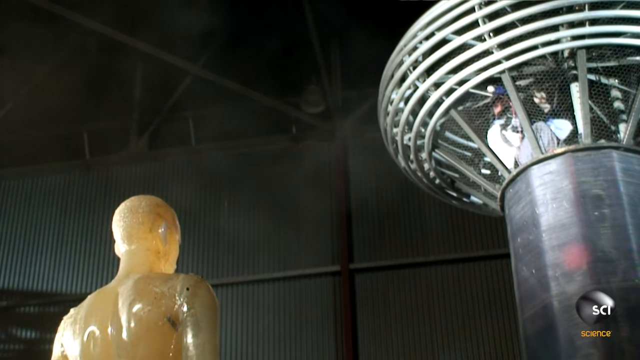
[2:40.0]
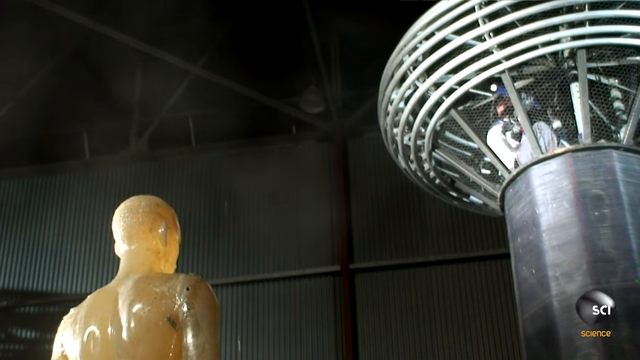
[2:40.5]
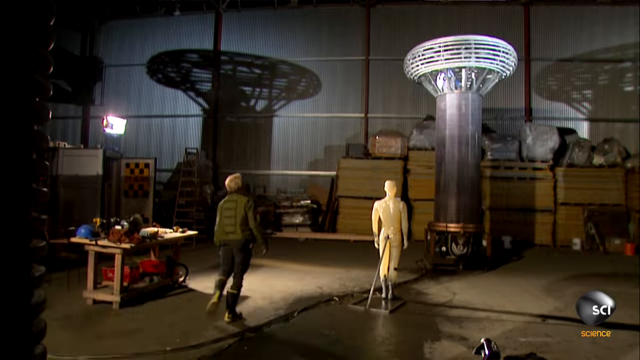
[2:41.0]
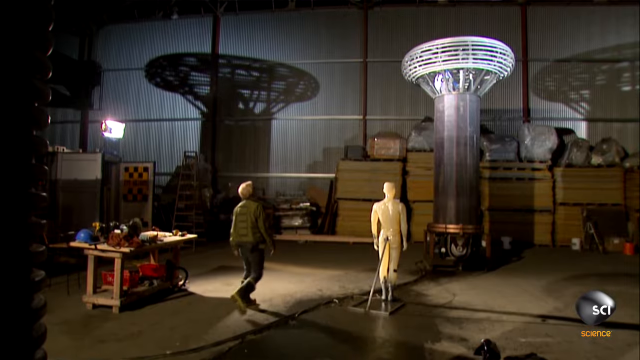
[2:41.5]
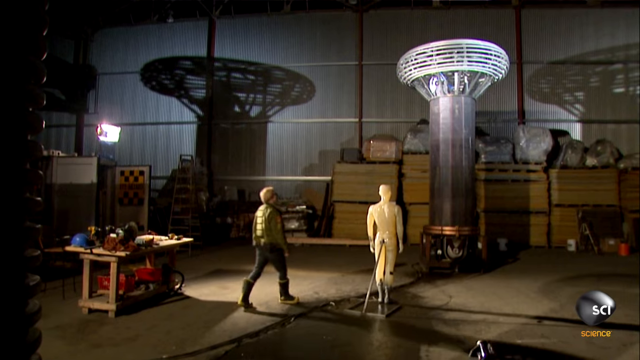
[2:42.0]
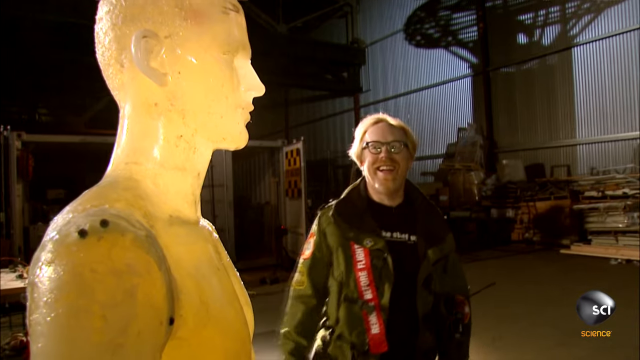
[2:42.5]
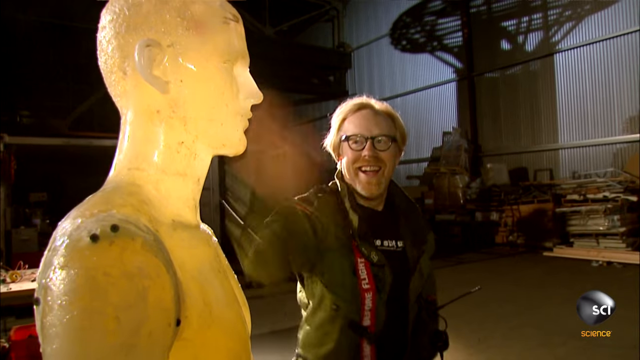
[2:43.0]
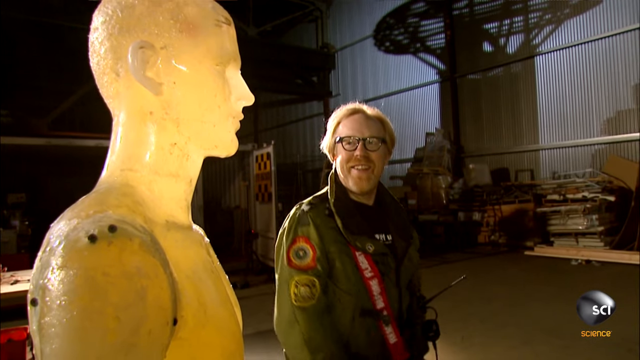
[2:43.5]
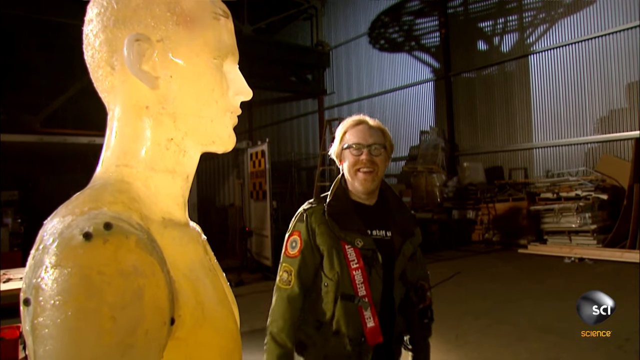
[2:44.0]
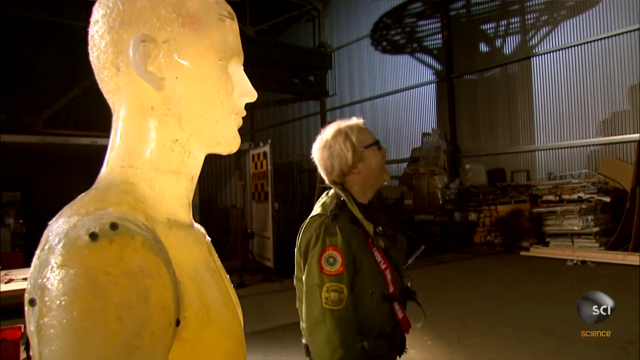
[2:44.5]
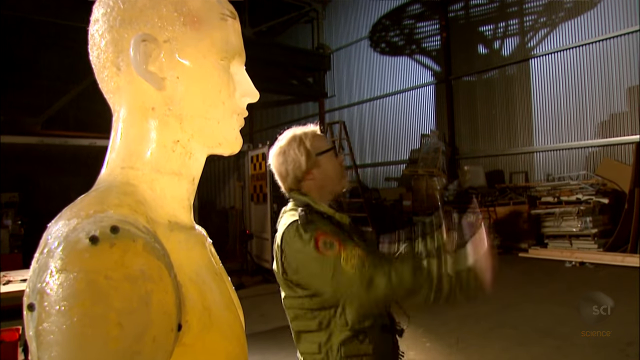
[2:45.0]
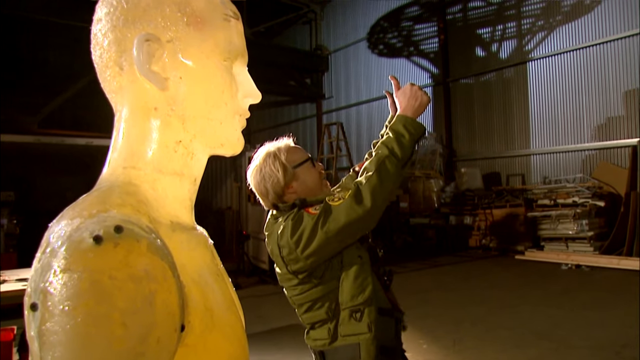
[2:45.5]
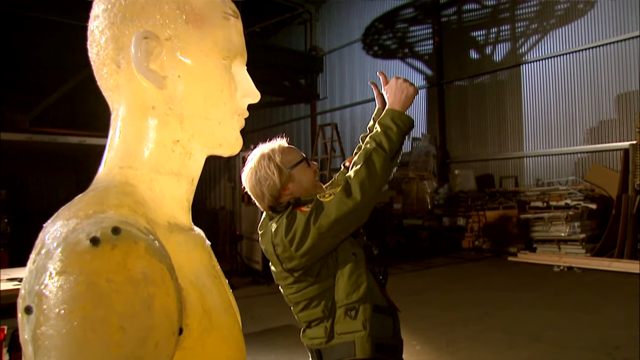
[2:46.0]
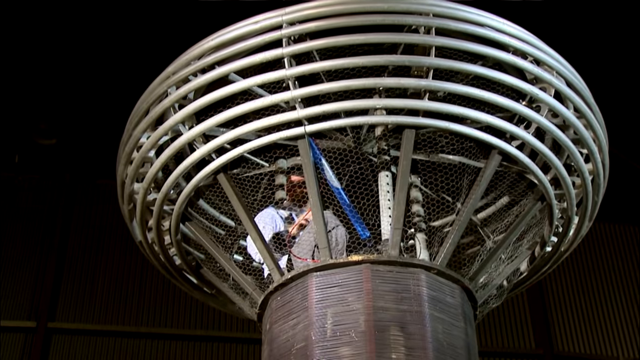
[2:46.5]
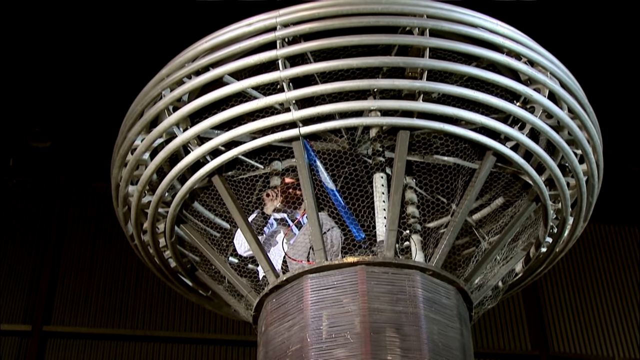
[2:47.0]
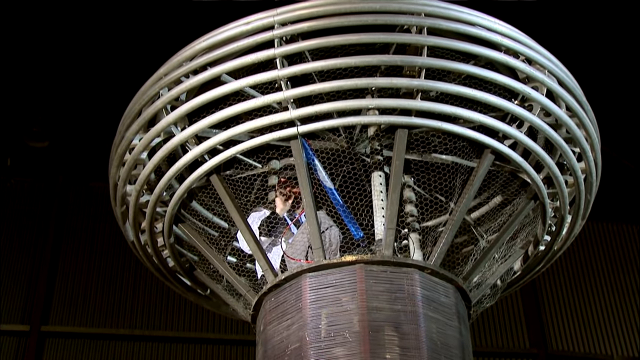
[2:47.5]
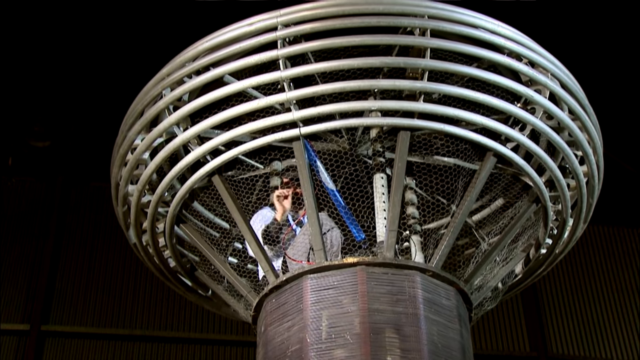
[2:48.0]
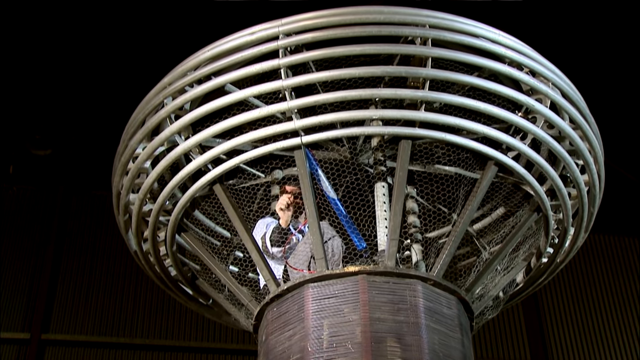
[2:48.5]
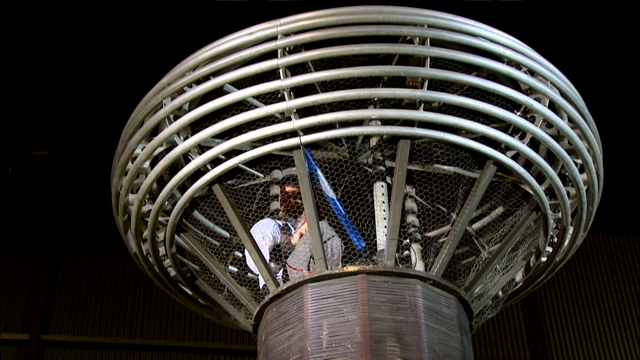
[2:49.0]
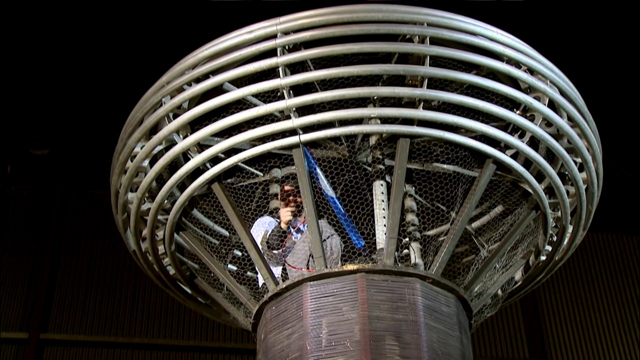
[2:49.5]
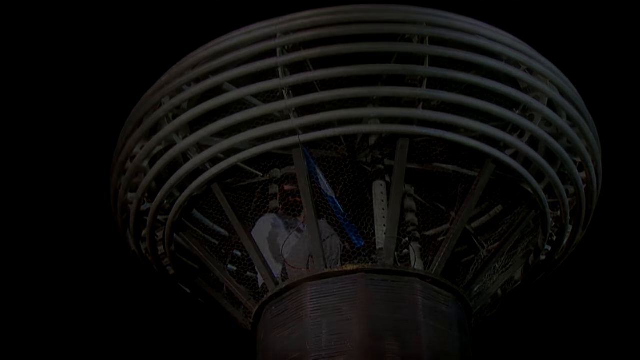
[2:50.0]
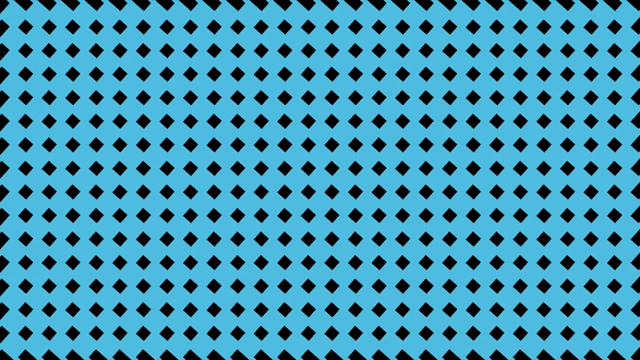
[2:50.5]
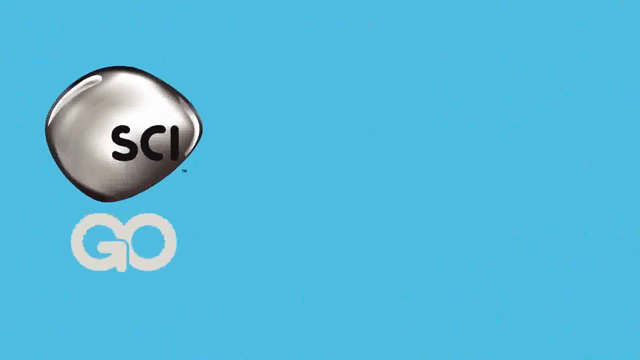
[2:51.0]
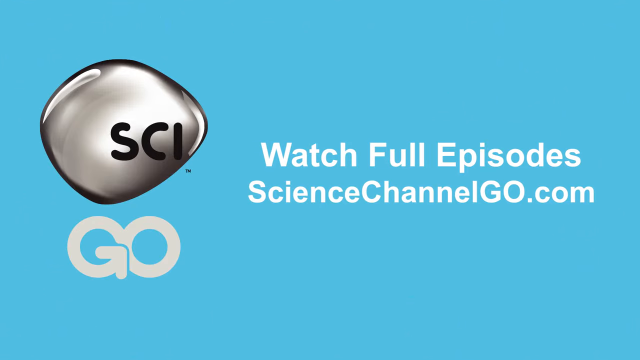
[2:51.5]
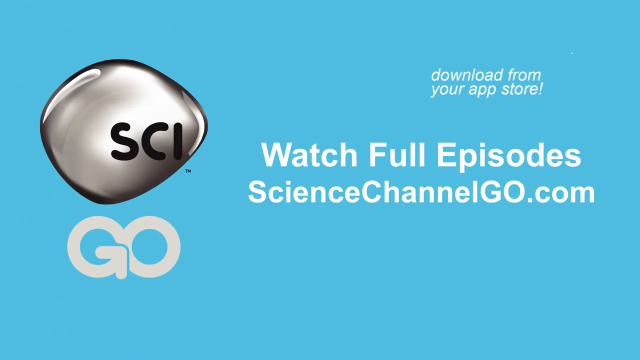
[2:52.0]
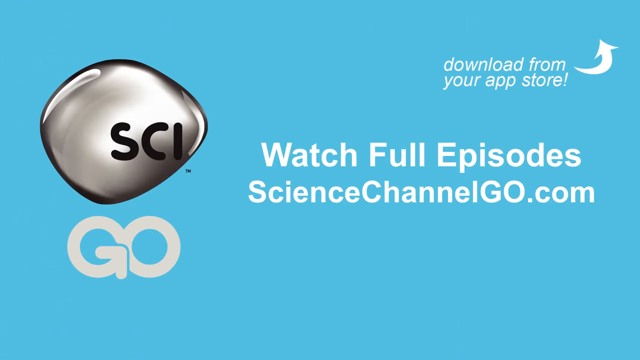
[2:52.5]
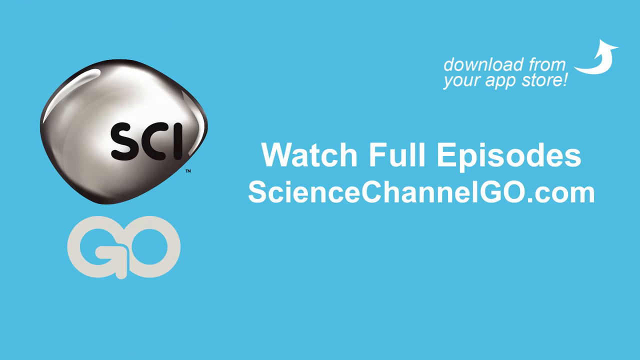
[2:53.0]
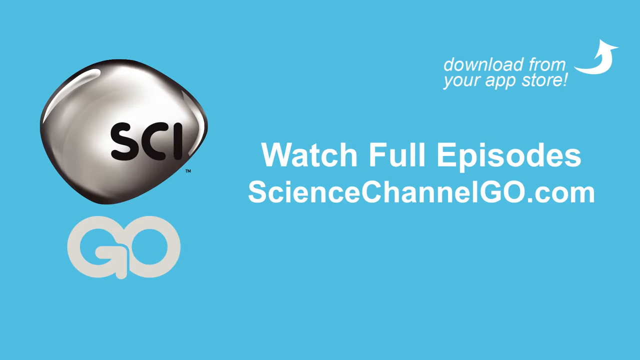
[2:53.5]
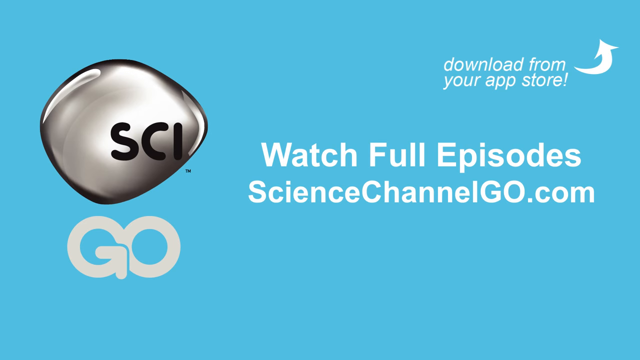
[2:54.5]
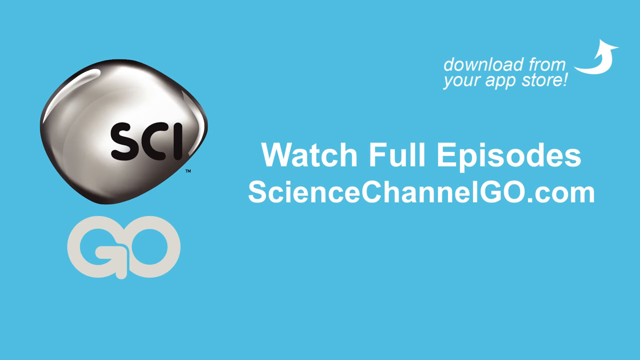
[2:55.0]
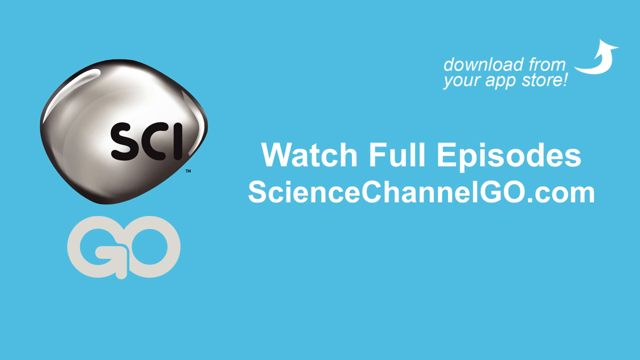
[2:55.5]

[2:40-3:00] At the end of the experiment, the younger man comes up to the mannequin, kind of hits it on the side of the head, and gives Jamie a double thumbs up. Jamie, in the Tesla coil, points at him. Then text appears telling viewers to "go watch full episodes of the science channel". The ending screen has a light, sky-blue background with something metallic-looking, unclear whether stone or liquid, and "SCI" in black letters with "GO" underneath in white letters that touch each other.